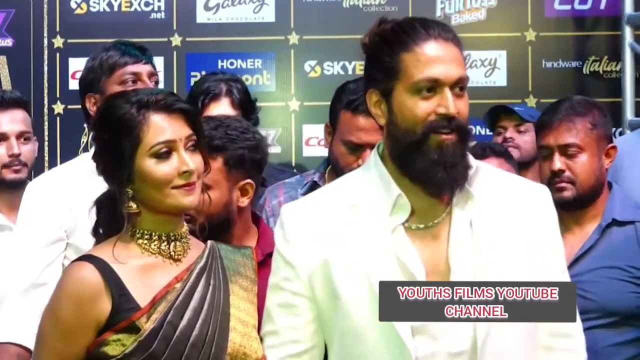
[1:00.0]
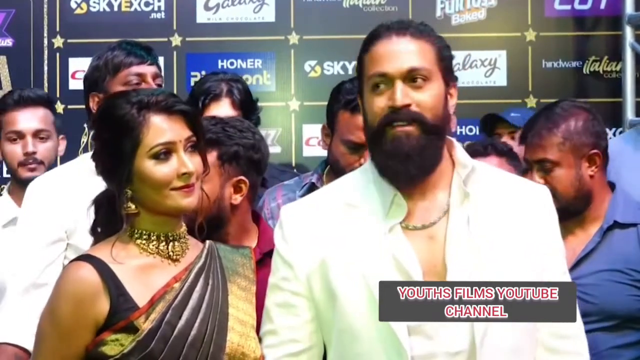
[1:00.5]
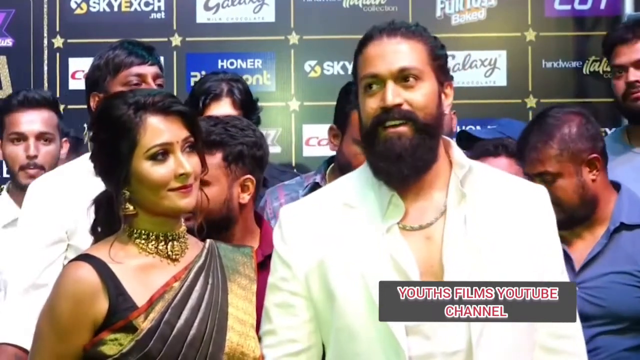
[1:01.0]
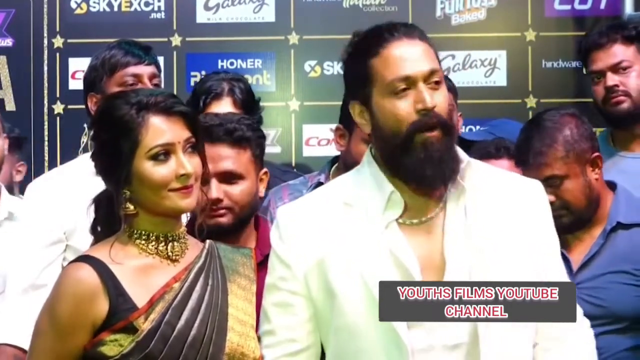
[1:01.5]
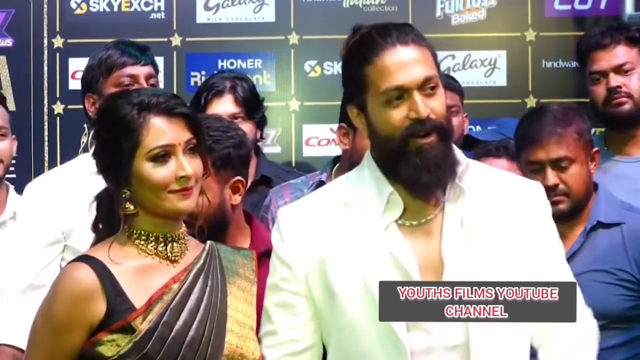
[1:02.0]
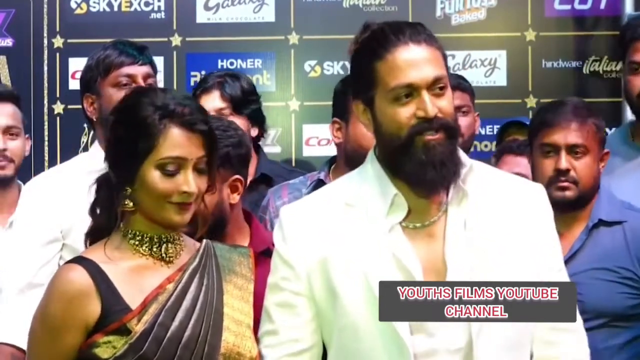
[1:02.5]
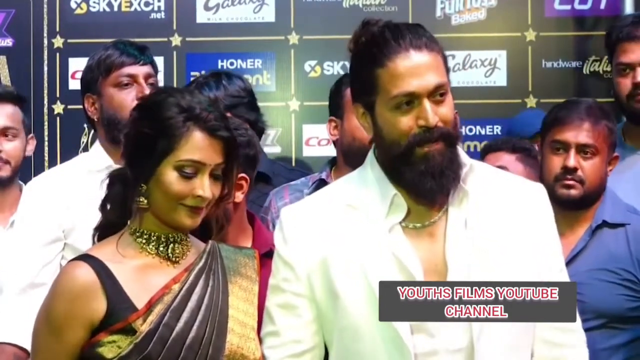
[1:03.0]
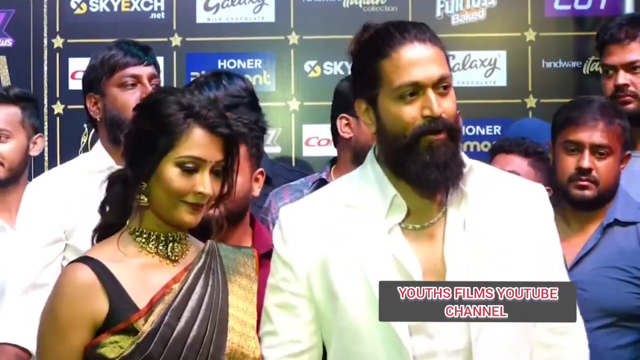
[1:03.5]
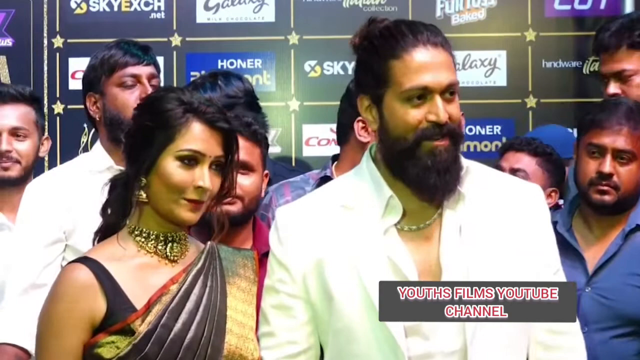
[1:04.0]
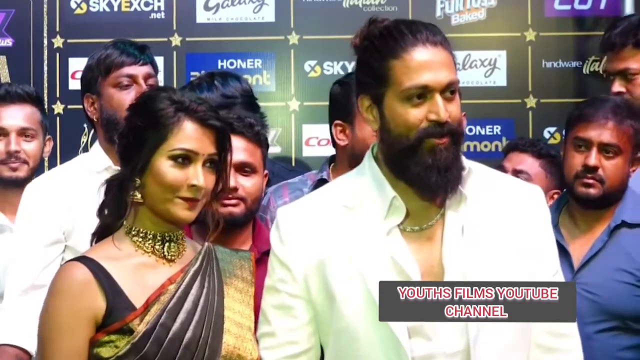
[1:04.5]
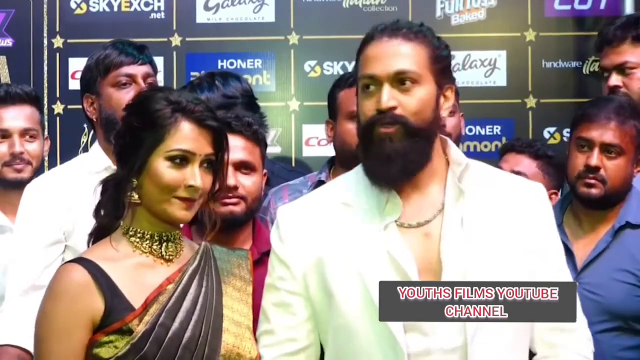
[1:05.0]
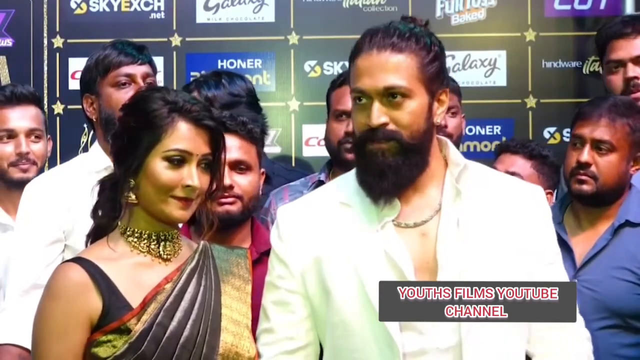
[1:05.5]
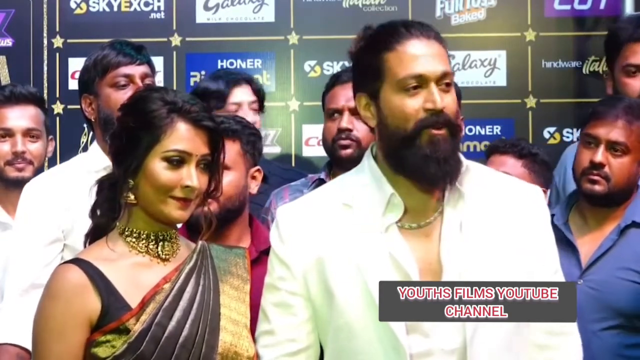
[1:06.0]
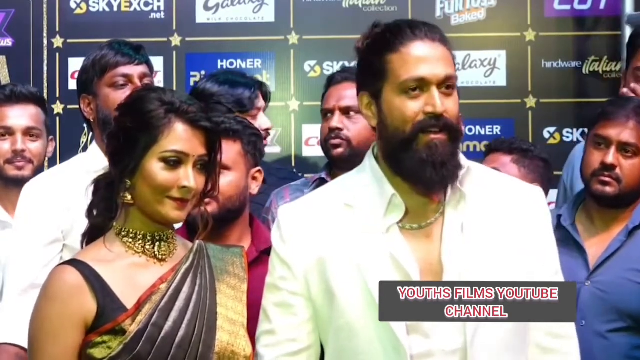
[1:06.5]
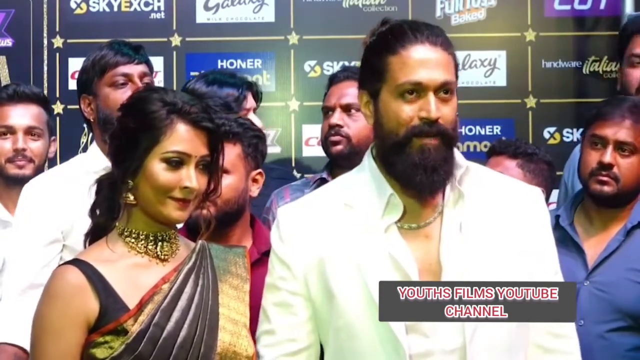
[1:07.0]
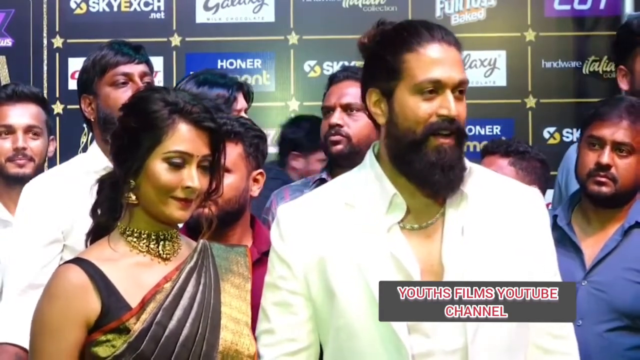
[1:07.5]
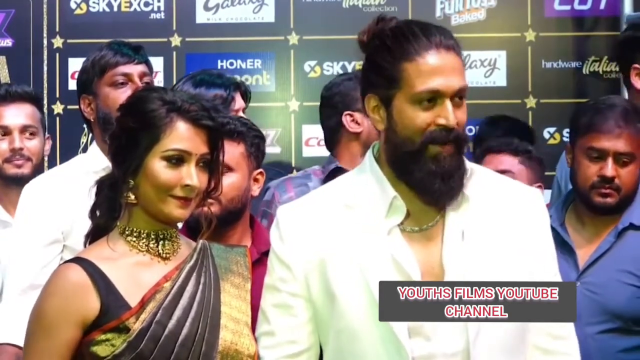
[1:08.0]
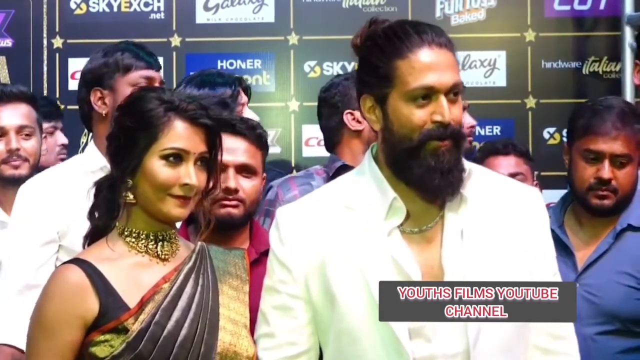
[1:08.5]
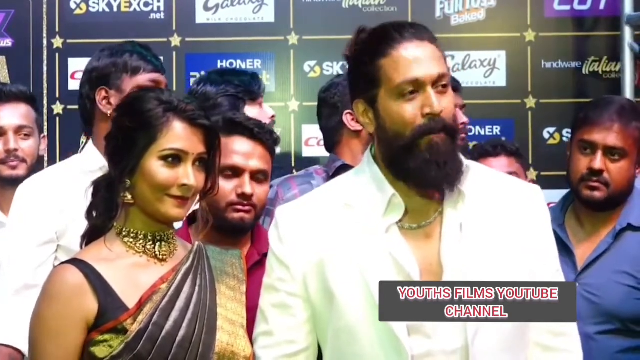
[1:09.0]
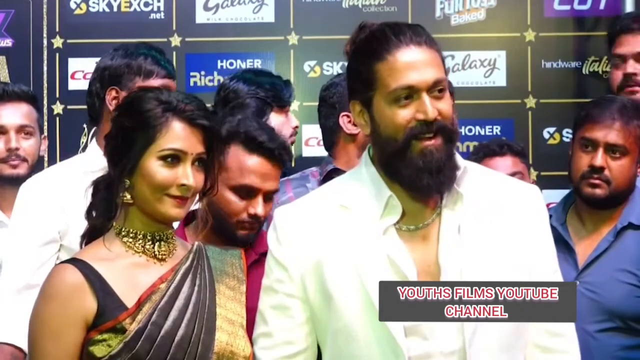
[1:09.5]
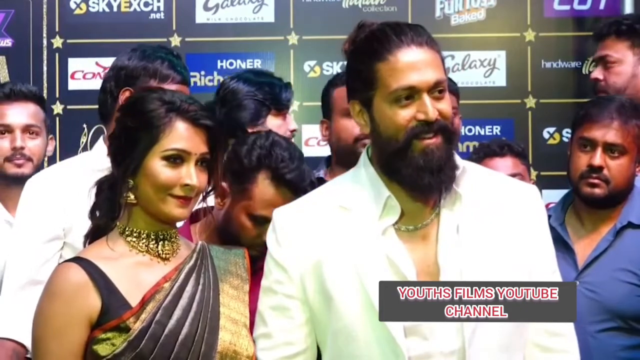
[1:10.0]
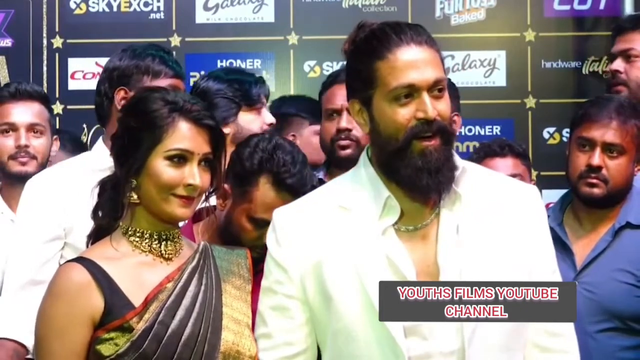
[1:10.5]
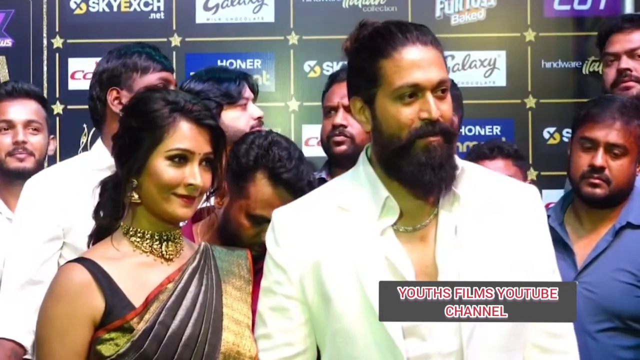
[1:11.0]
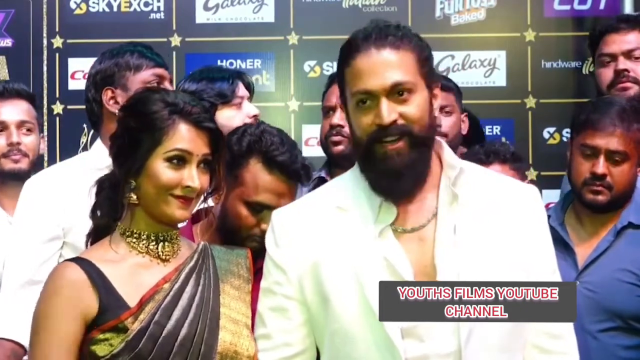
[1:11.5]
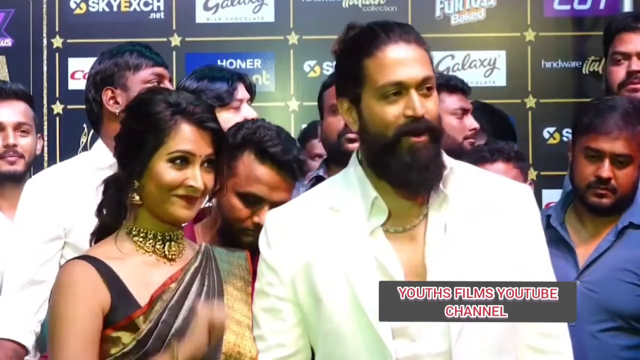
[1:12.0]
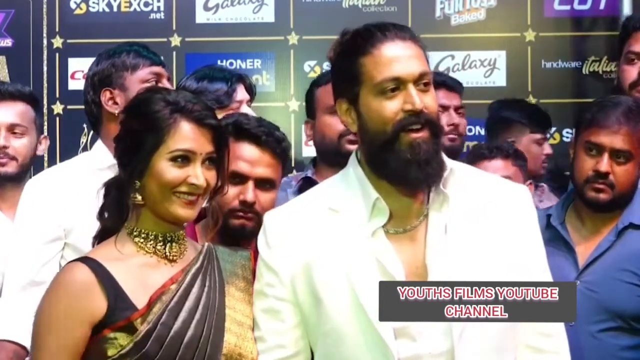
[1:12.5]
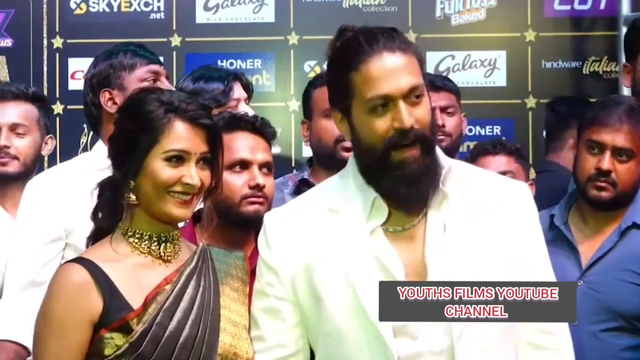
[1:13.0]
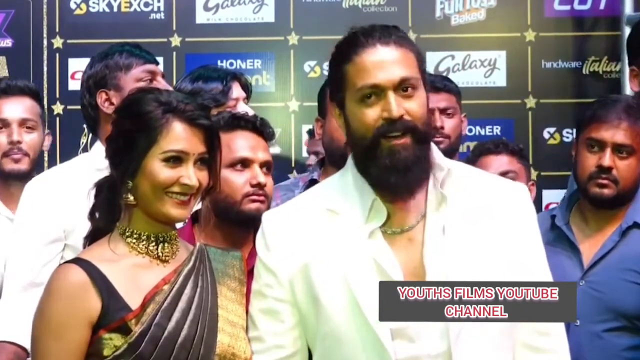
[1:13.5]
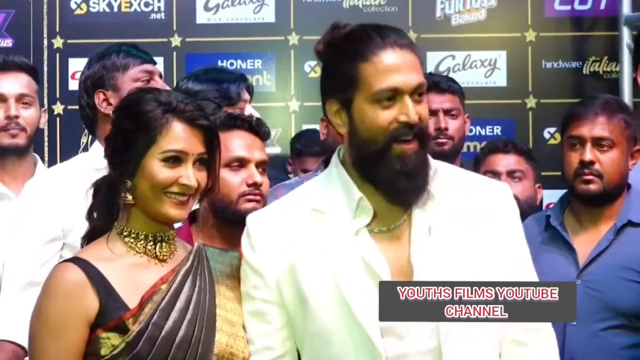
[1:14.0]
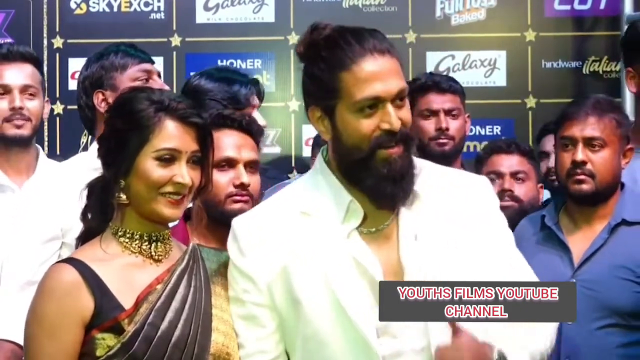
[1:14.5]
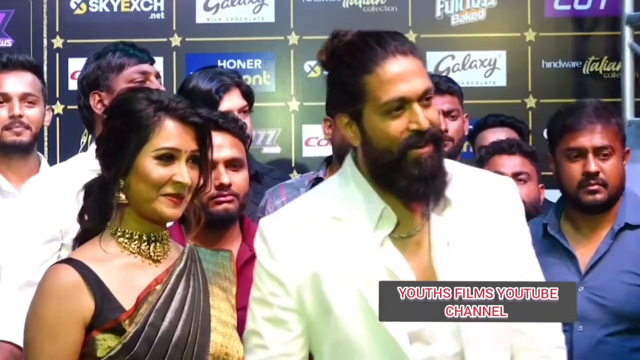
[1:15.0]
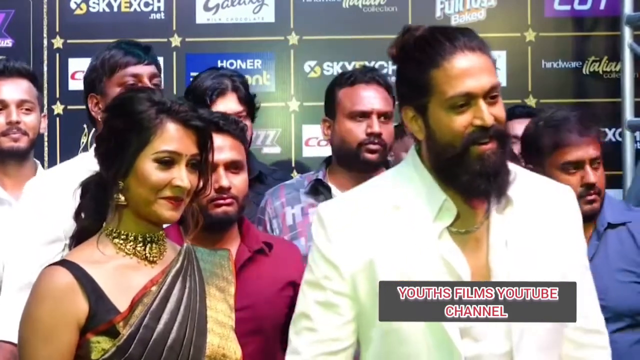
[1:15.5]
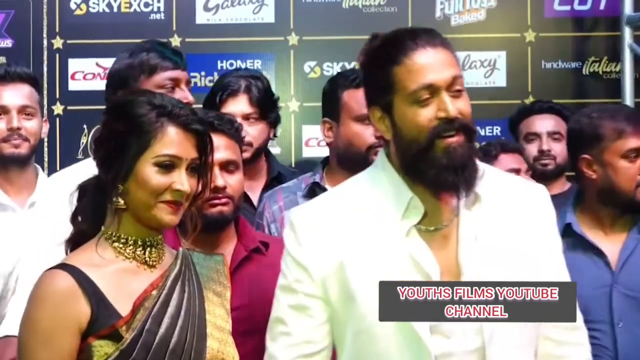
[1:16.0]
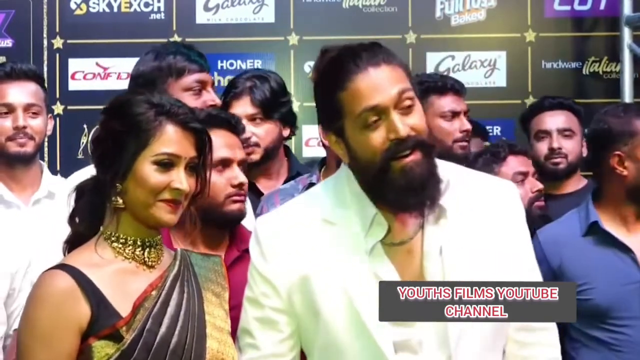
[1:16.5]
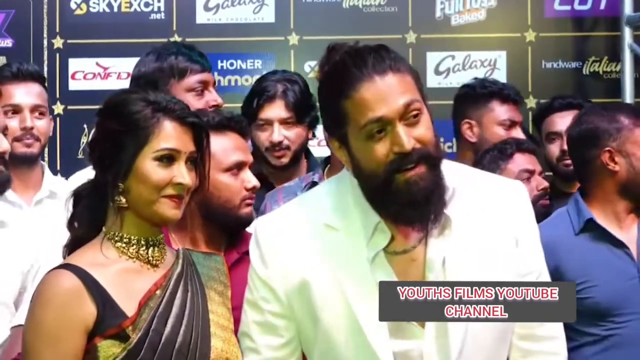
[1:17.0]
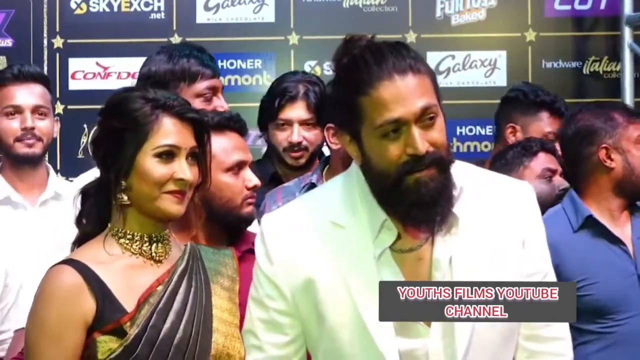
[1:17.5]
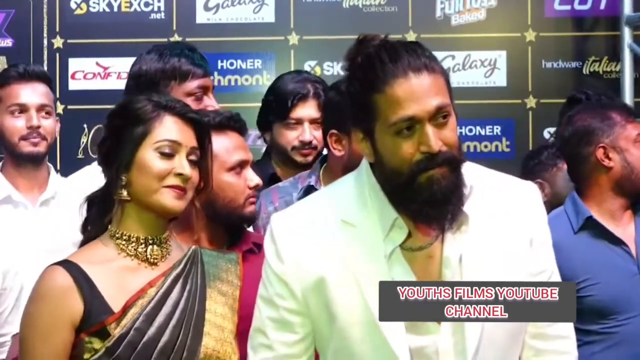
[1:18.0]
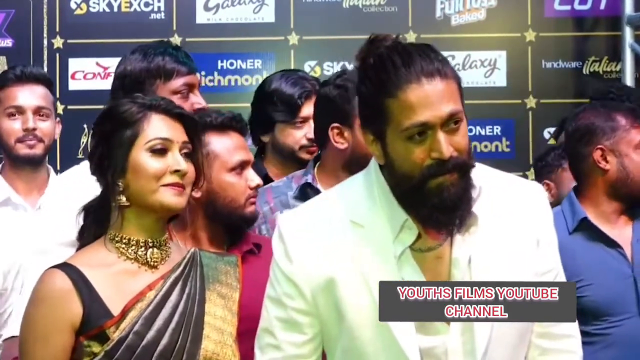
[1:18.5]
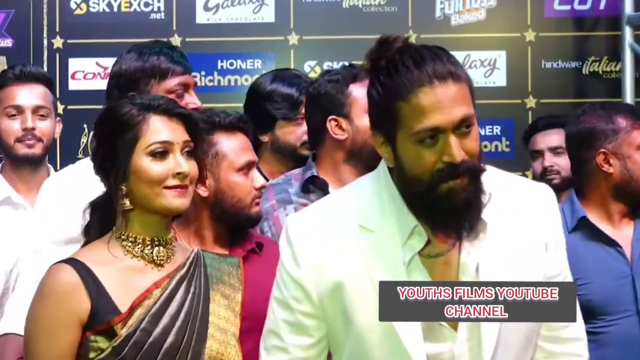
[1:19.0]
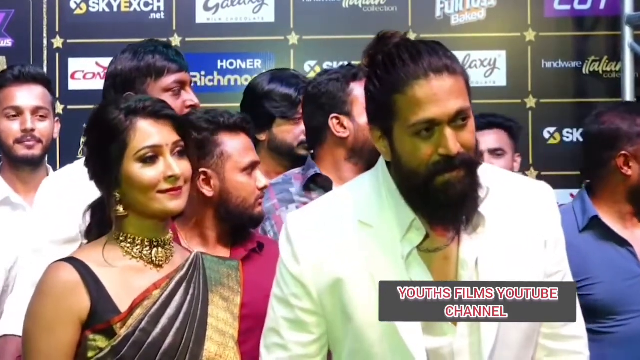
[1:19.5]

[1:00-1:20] A man and a woman talk to the press, apparently at some kind of event, since at the back there is a grid of company logos that say things like "galaxy sky X Confident honor Richmond". In the foreground, the man appears to wear a white suit unbuttoned to the mid chest, a gold chain, and has a full dark beard and mustache and dark hair tied up into a bun. The woman wears a brown and gold sari with something like red trim on top, and she also appears to be wearing possibly a black tank top underneath, one strap of which is visible on the left. She wears gold jewelry, a necklace and some earrings, and her black hair is in a low ponytail. A crowd of people behind them, presumably journalists and paparazzi, kind of mill about and look around, standing very close to the couple and presumably waiting for their next photo opportunity.